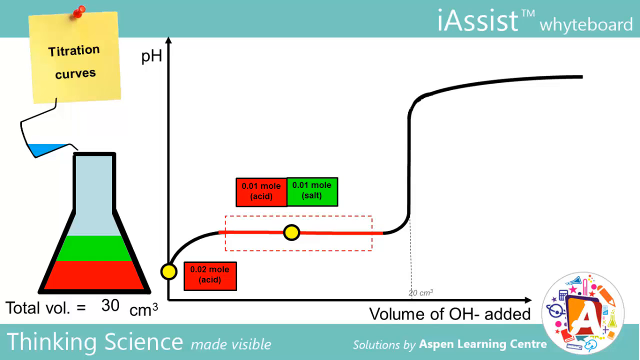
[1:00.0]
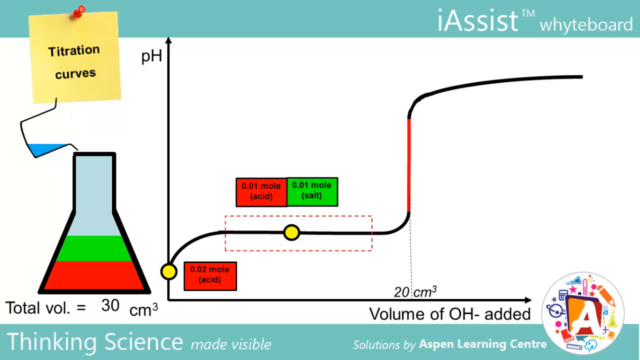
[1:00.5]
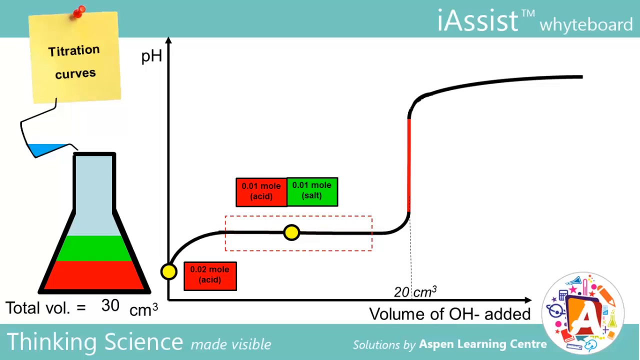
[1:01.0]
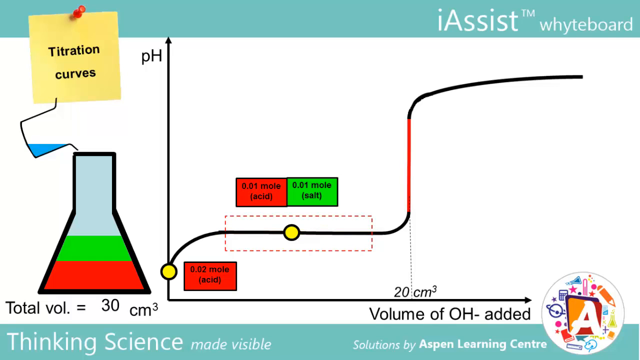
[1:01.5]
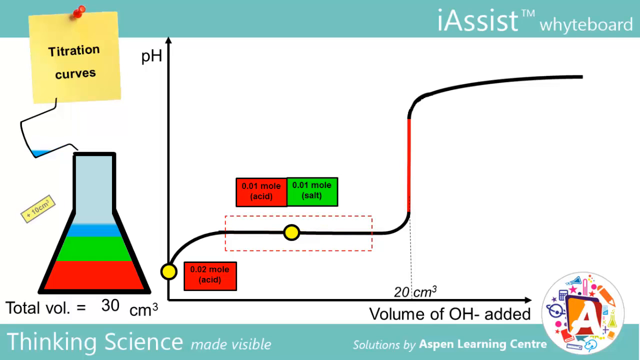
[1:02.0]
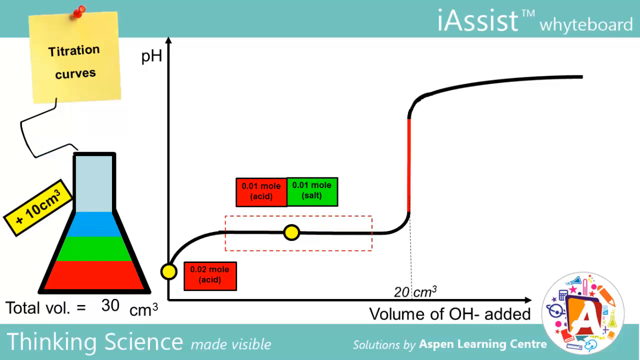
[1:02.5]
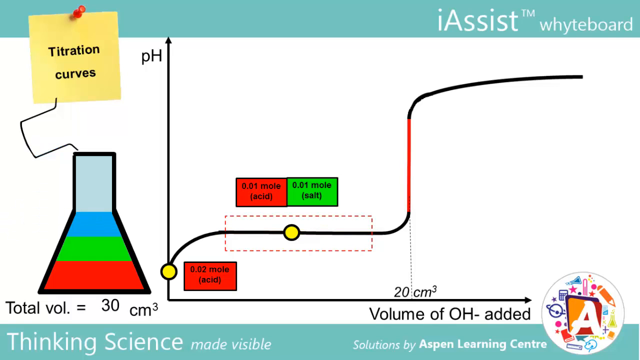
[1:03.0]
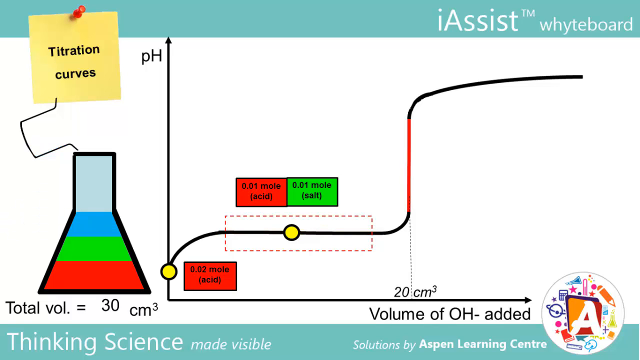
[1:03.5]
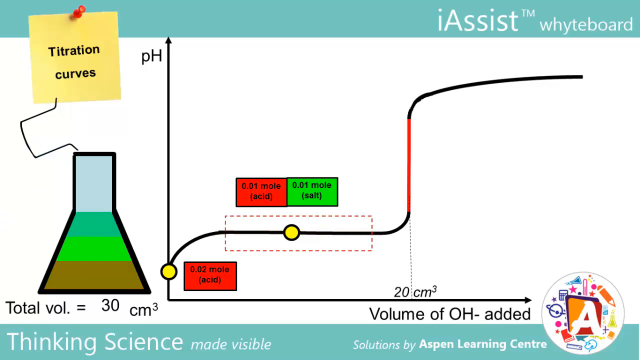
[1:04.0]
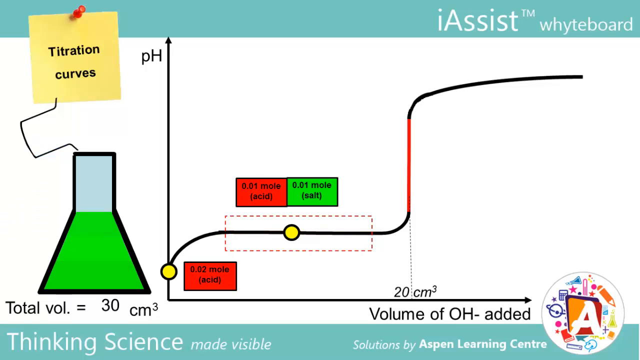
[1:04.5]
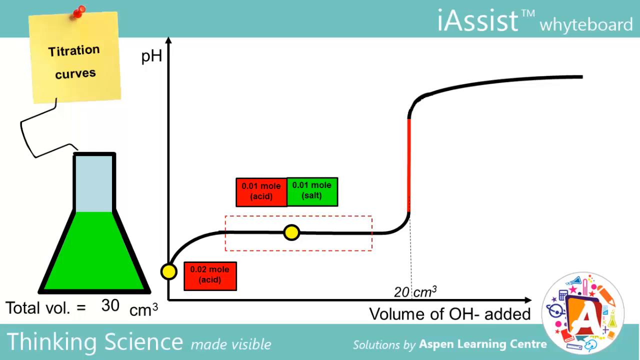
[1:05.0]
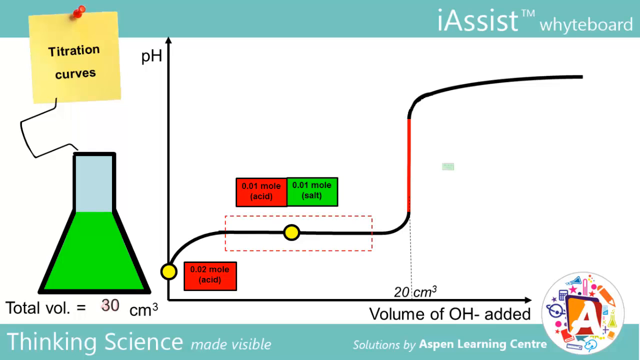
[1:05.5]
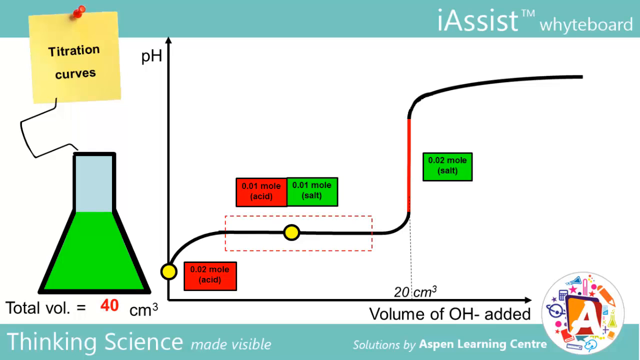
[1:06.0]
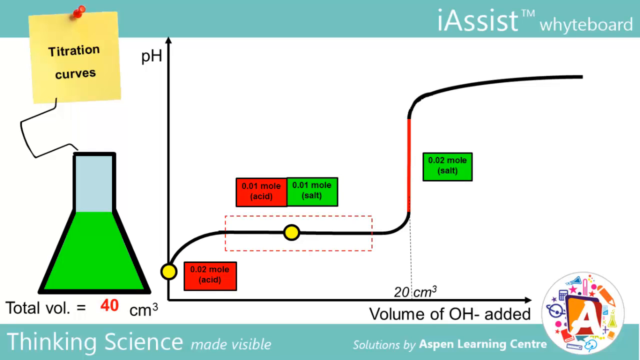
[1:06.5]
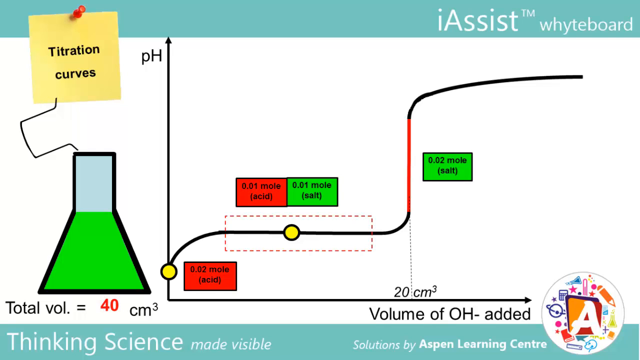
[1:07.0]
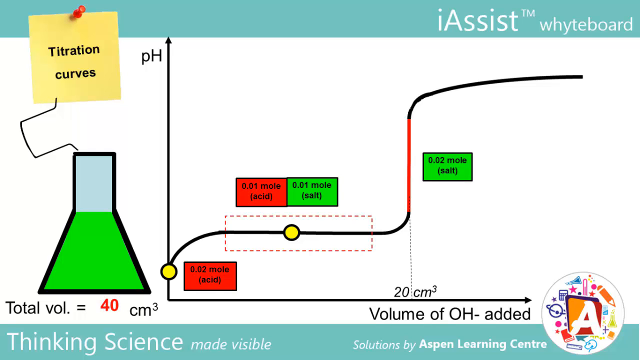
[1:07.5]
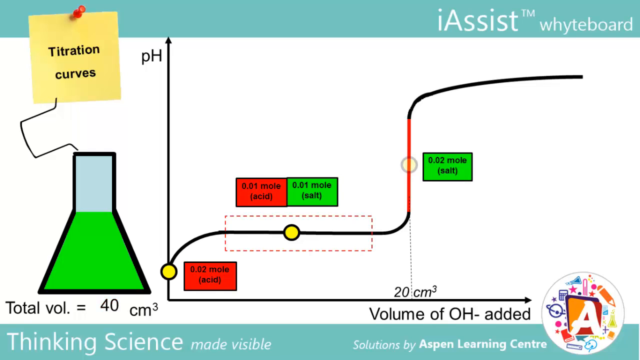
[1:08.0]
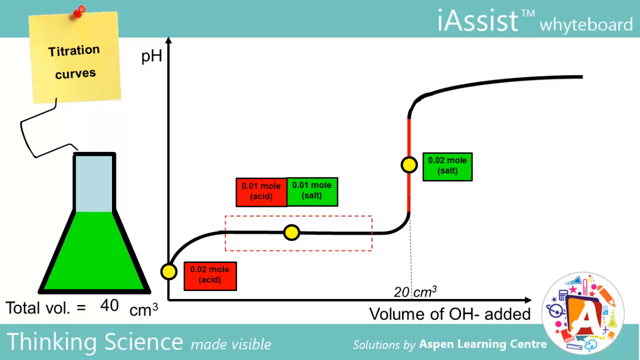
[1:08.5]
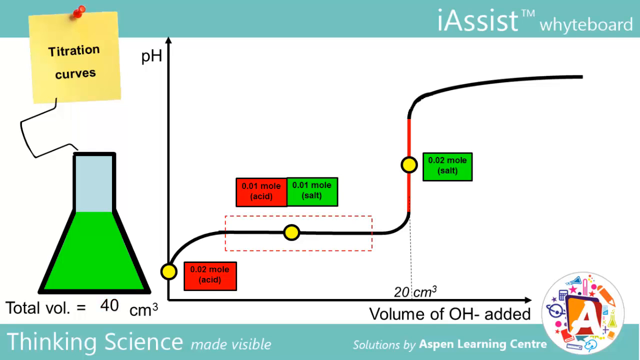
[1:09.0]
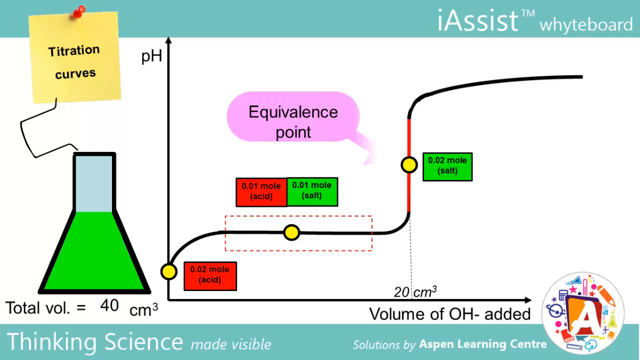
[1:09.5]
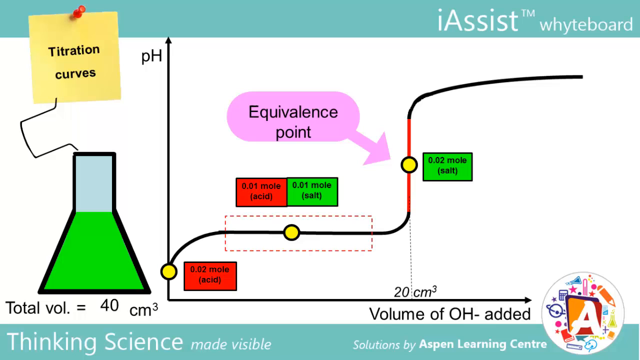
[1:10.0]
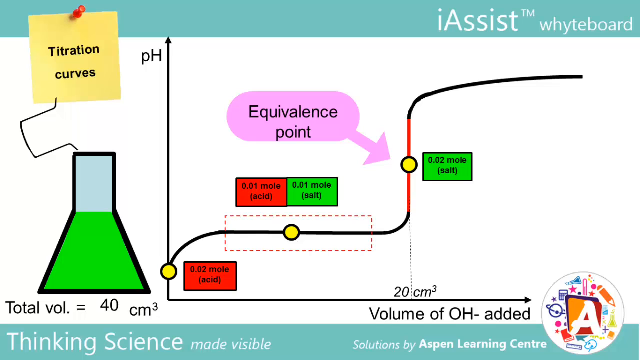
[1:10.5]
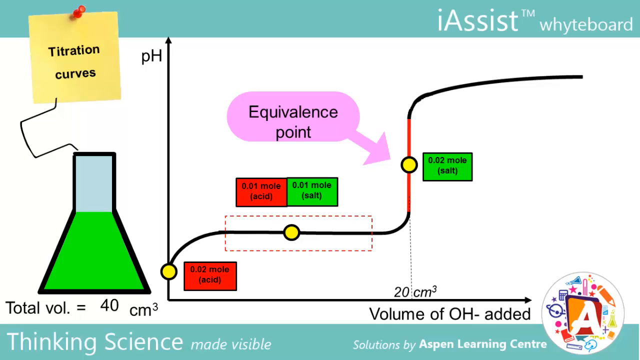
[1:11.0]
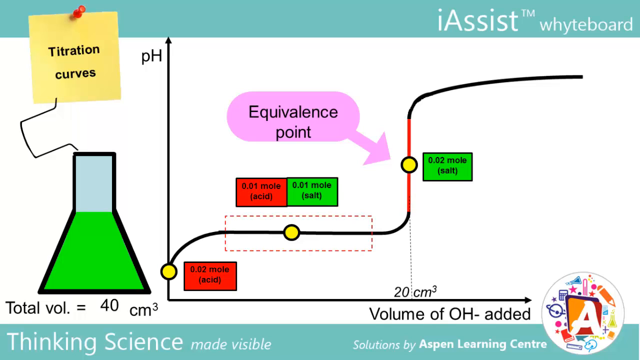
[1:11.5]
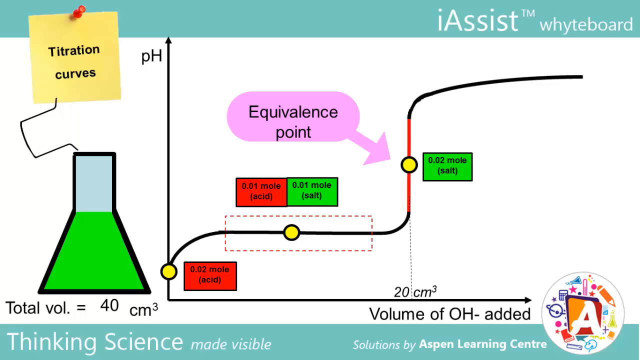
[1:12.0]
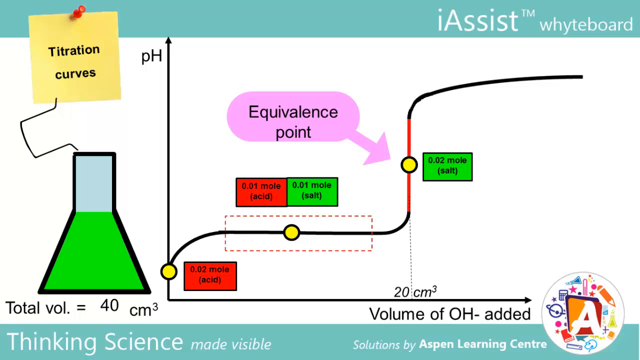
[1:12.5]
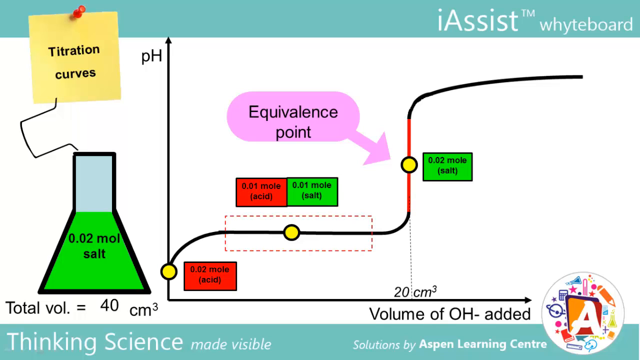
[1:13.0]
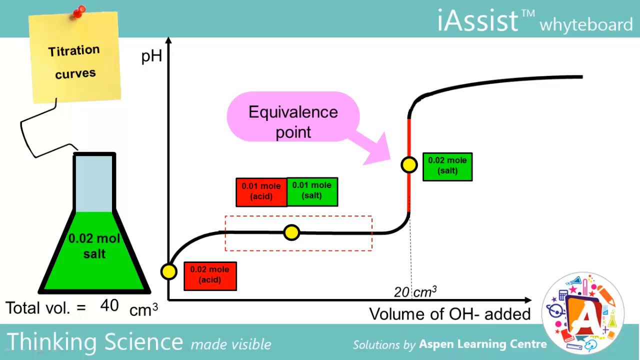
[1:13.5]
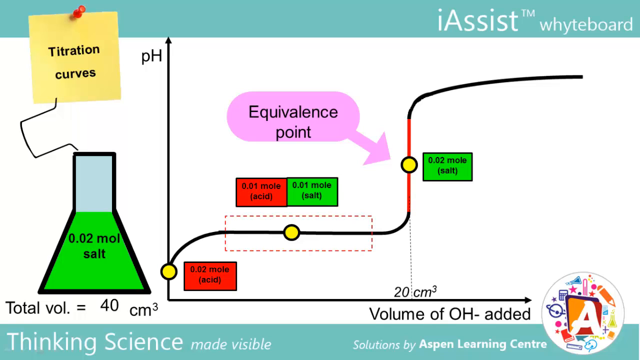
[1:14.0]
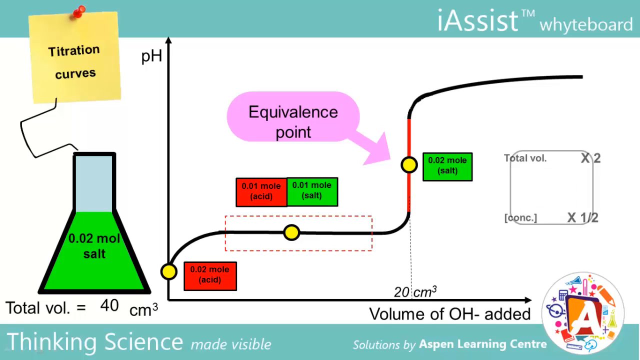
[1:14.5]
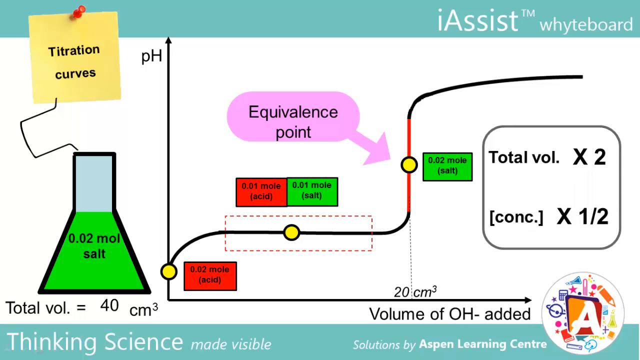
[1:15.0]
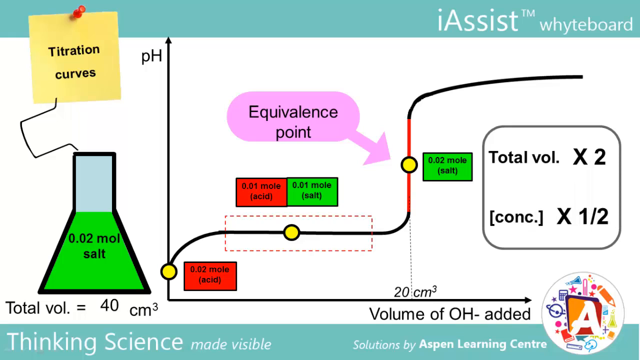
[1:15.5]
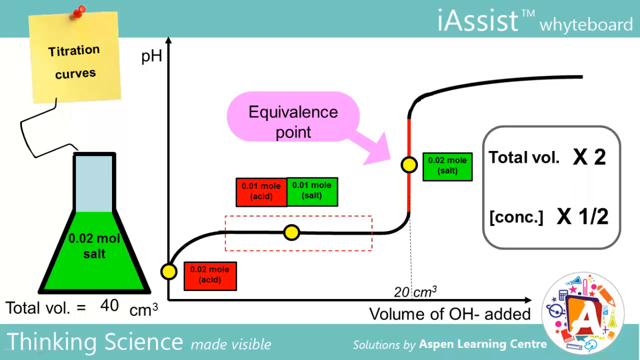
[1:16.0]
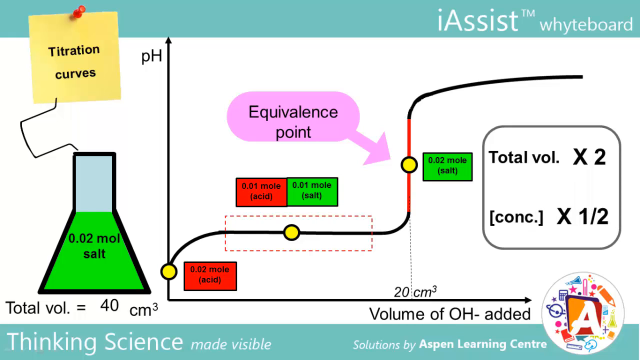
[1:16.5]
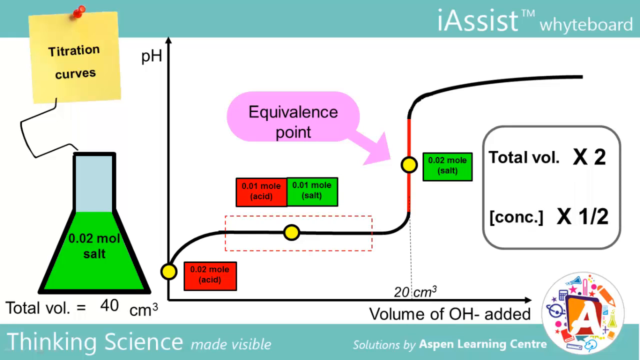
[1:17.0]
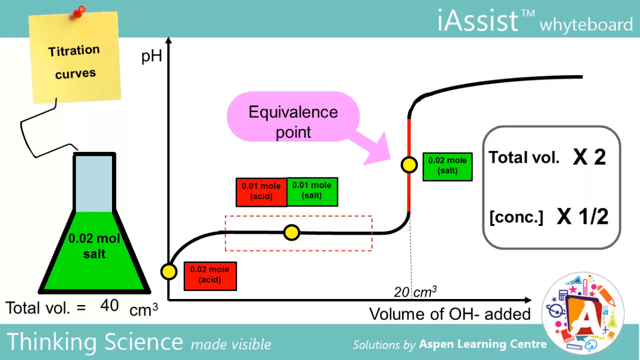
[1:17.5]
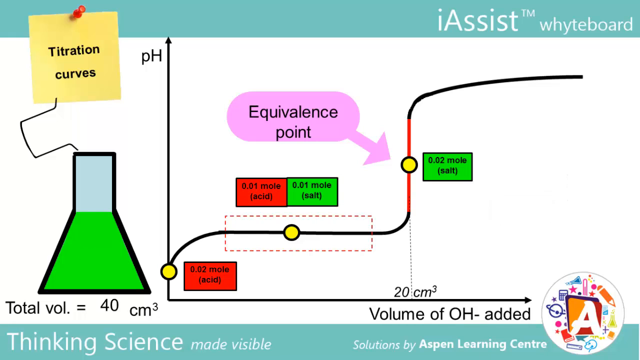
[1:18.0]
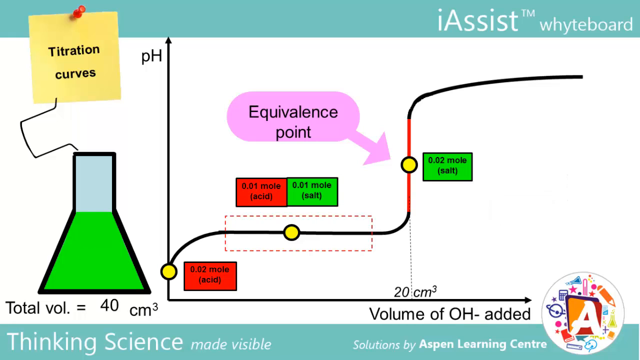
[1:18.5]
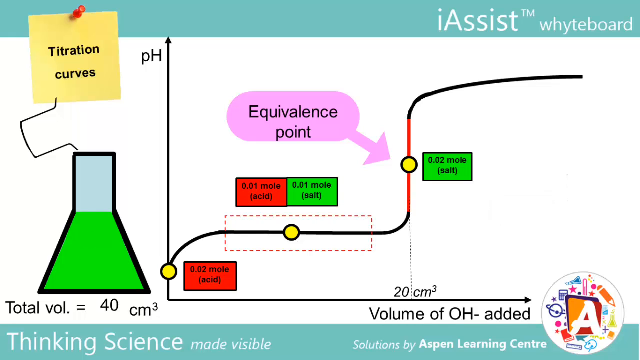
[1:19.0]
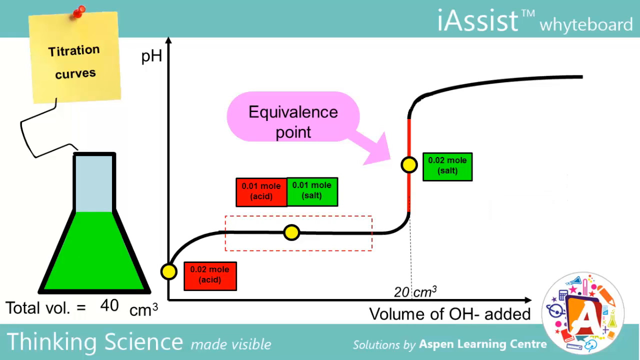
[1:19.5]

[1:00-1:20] A blue section appears inside the container-shaped design on the left side of the screen. A small rectangle and a yellow banner also appear, with black inscriptions inside. The three bands on the left of the frame, red, green and blue, then join together into a single color, green. In the graphic, a portion of the curve is highlighted in red, and next to this section a green rectangle with black inscriptions appears. A yellow circle also appears on the curve, along with a round pink shape with an arrow pointing to the yellow circle; two black lines of text appear inside the pink shape. Then a rectangular box with rounded corners appears on the right, with black inscriptions inside. The animations run very smoothly.